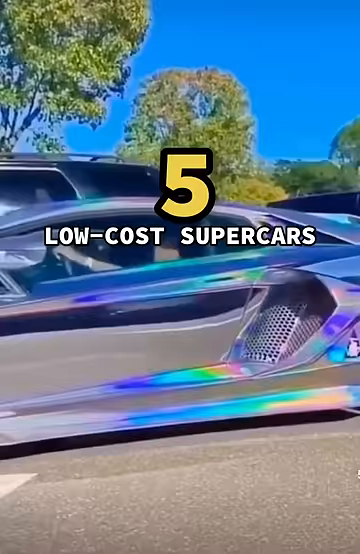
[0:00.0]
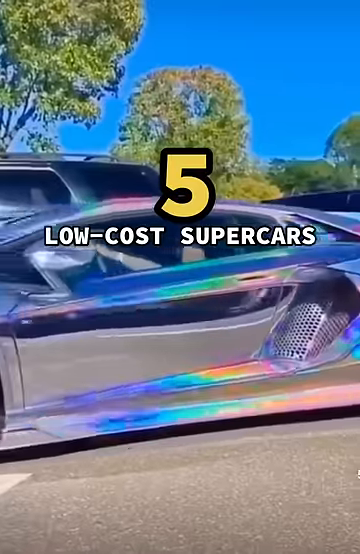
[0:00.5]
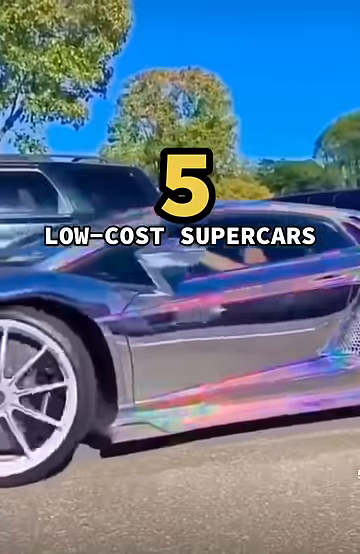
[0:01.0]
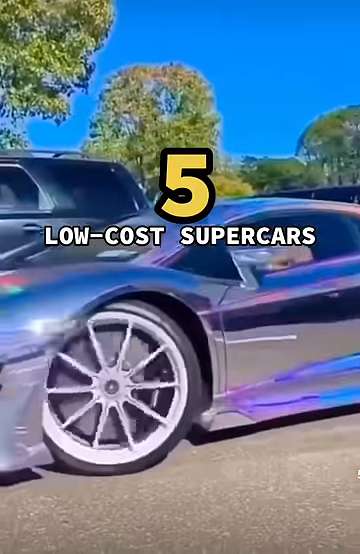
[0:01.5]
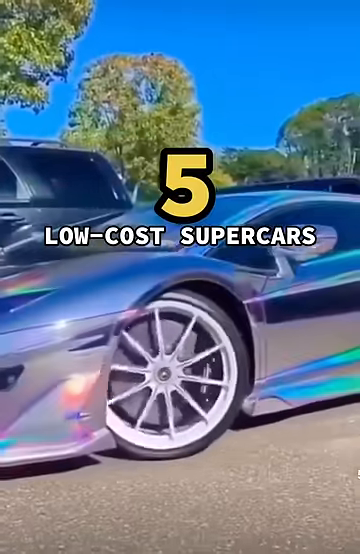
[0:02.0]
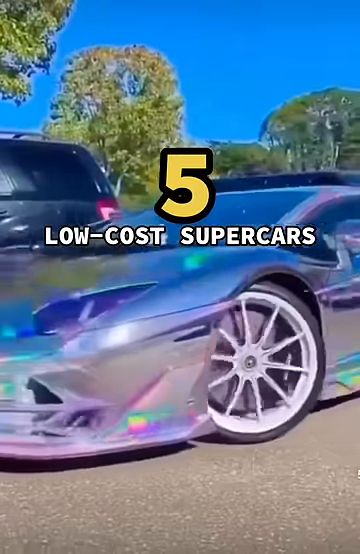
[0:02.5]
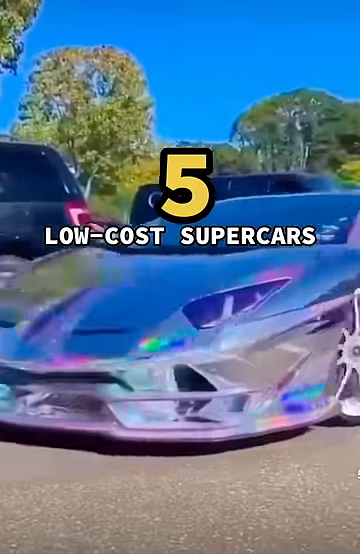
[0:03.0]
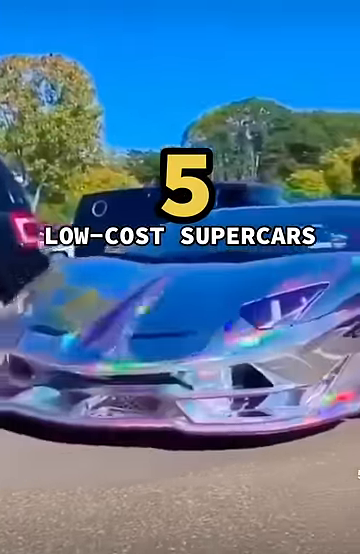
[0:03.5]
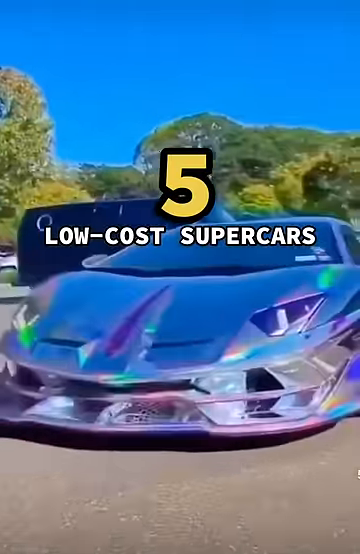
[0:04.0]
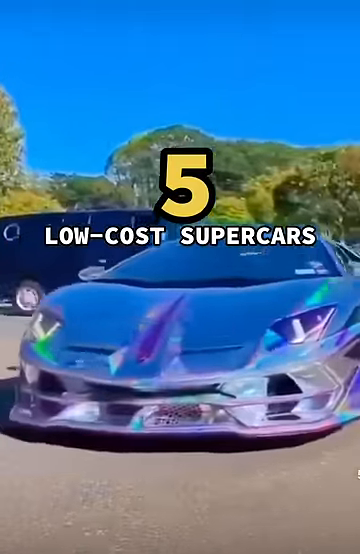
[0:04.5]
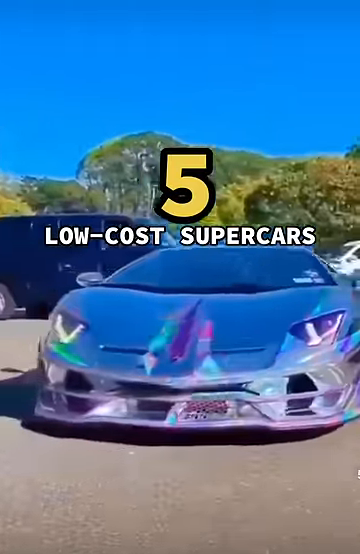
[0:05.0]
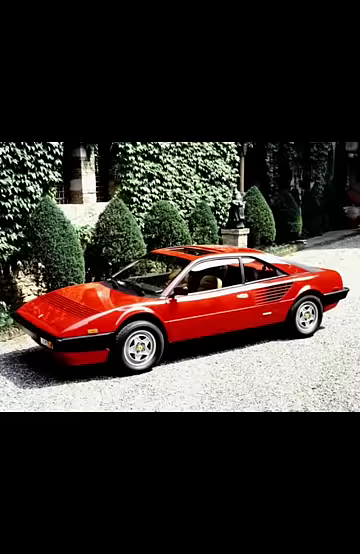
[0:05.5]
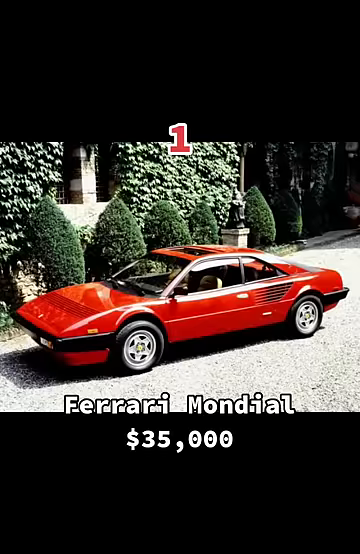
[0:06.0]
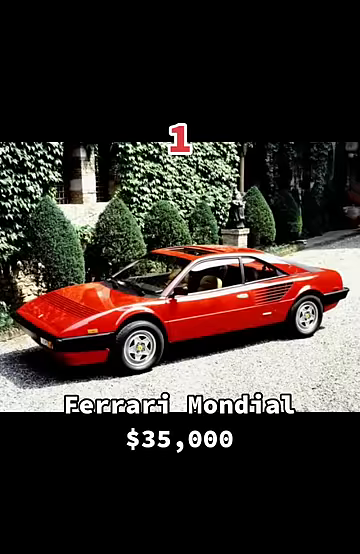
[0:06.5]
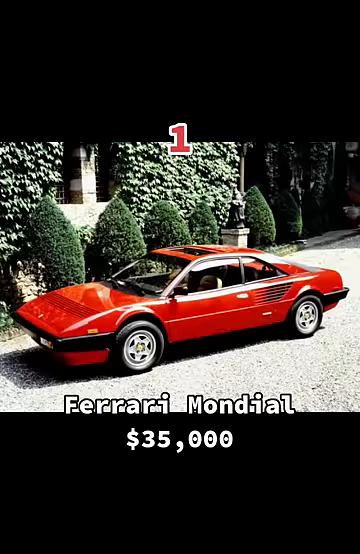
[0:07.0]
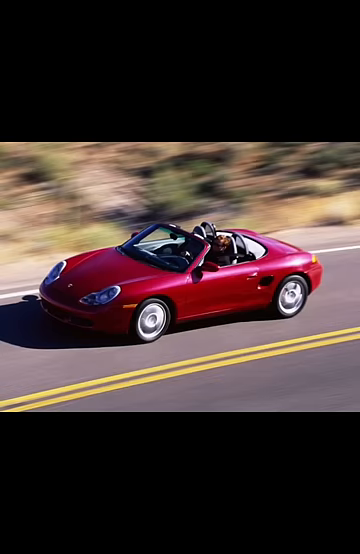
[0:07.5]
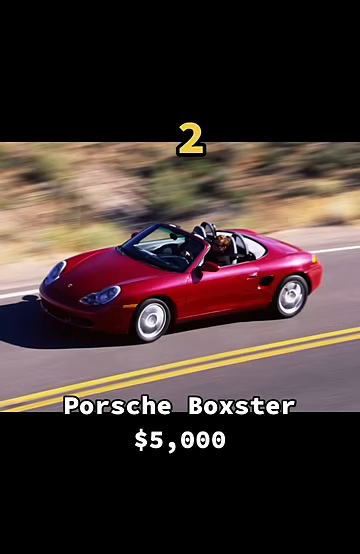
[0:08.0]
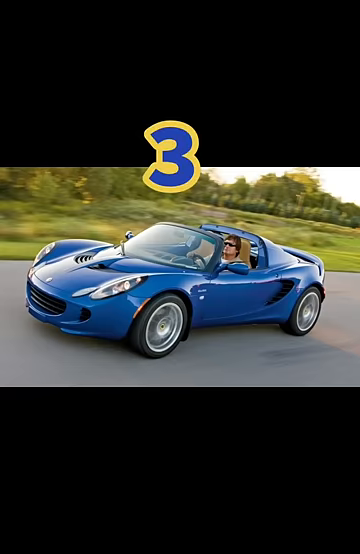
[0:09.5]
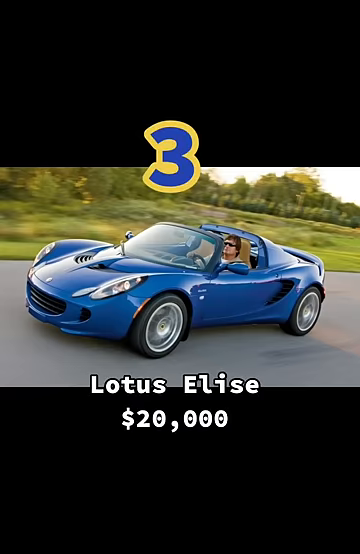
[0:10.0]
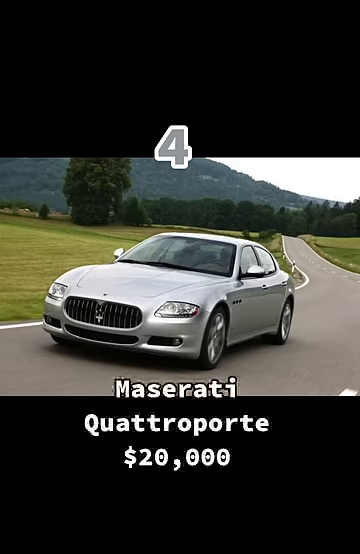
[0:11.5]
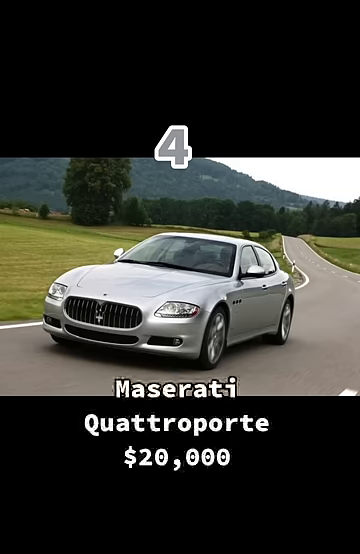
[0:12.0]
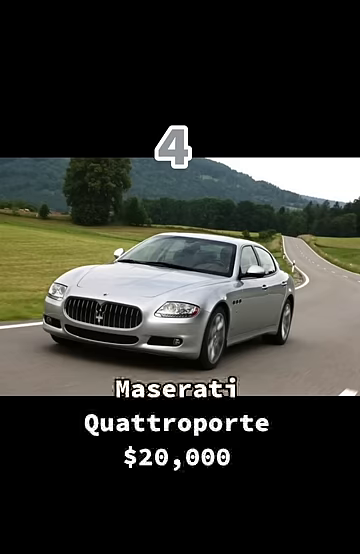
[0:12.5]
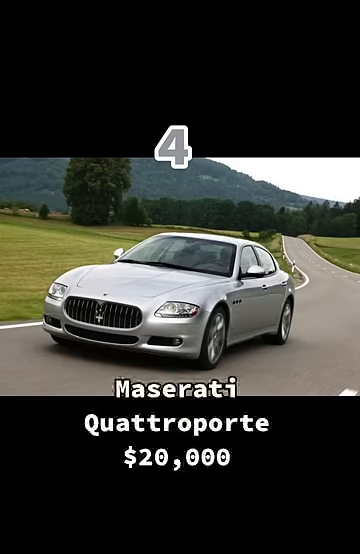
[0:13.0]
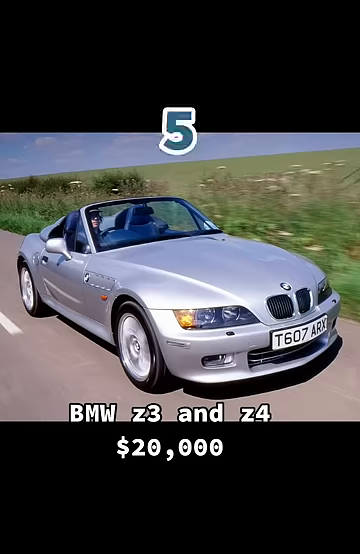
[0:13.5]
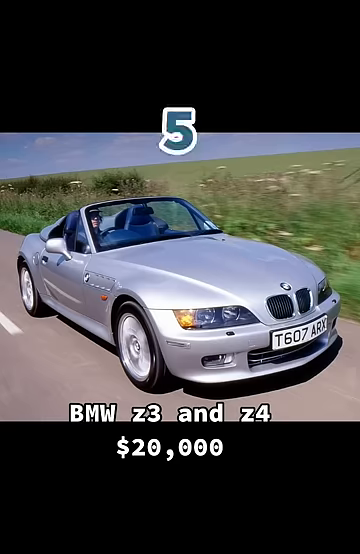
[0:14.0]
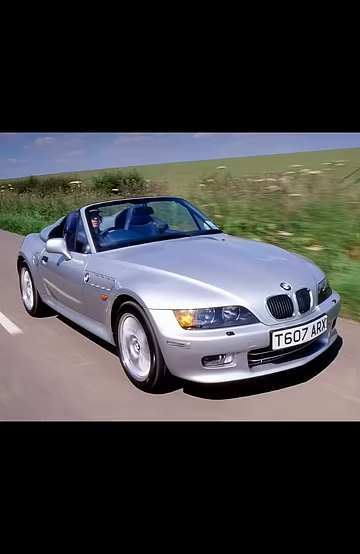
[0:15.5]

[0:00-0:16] The video opens with five supercars on a low budget. A low-cost supercar has a metallic purple, multi-chrome-like paint that gives off an array of green, pink, yellow and blue, and it is backing out. Next is a red Ferrari Mondial, $35,000; it has the number one at the top, so it is possibly number one. Number two is a red Porsche Boxster, $5,000, driving on the highway. Number three is a blue Lotus Elise, $20,000, with someone driving it. Number four is a silver Maserati, $20,000, driving on a backcountry road. Number five is a BMW Z3 and Z4, $20,000, in gray or silver. The video goes back to the metallic purple car with its multi-chrome colors; the pink, yellow and green appear in spots on the car, not all over. It then goes back to the Ferrari Mondial, which is a kind of warm shade of red.